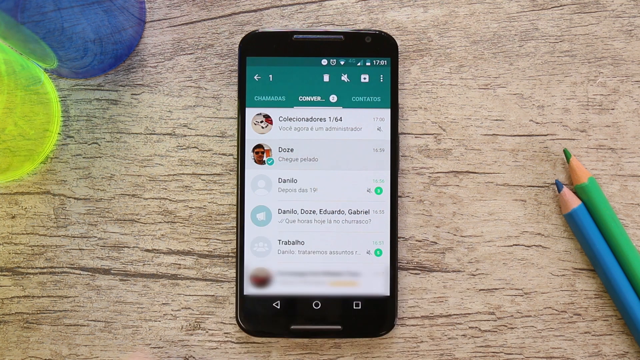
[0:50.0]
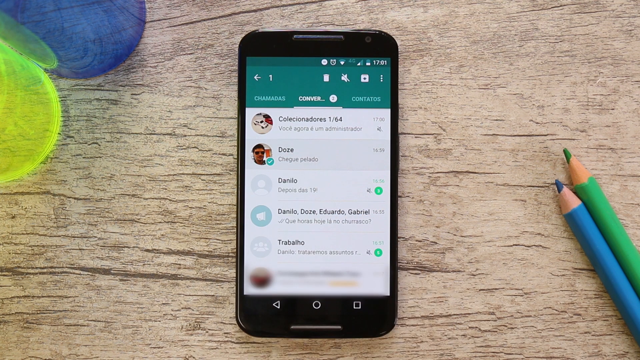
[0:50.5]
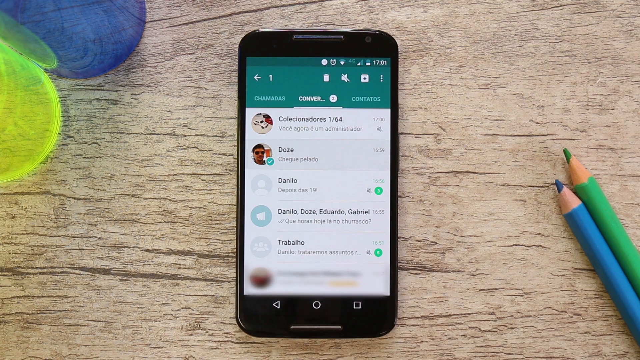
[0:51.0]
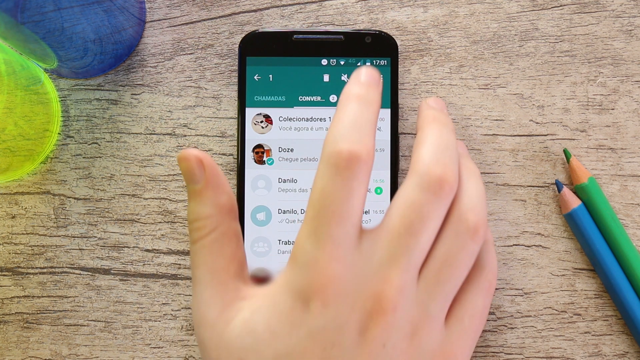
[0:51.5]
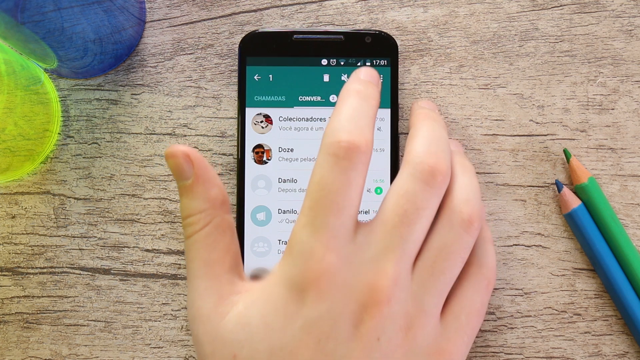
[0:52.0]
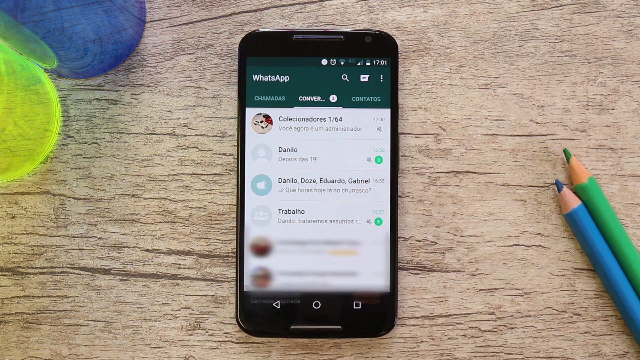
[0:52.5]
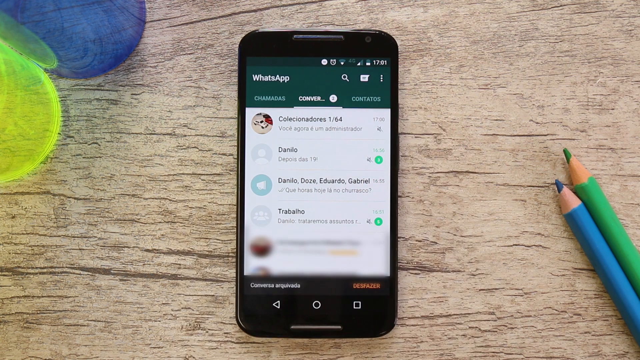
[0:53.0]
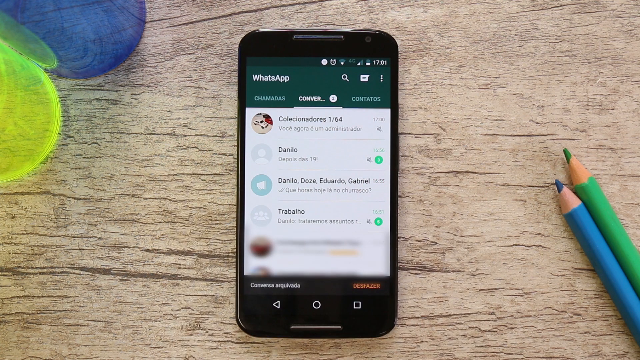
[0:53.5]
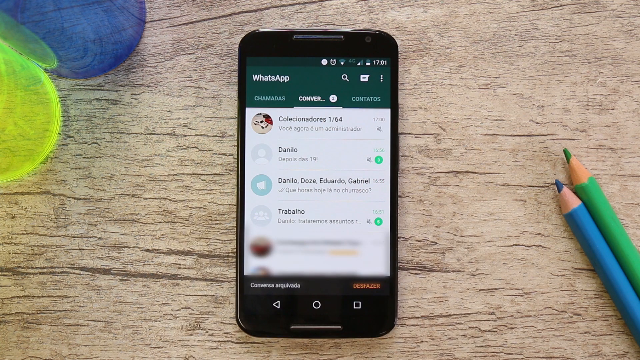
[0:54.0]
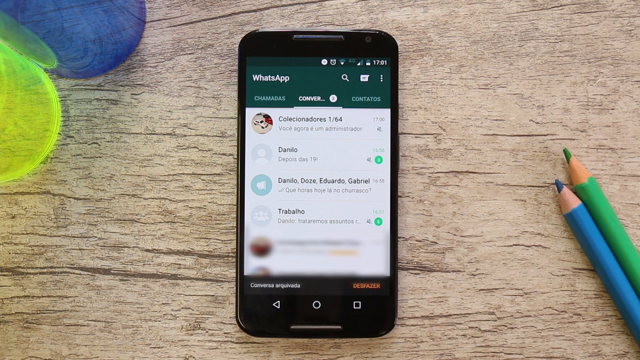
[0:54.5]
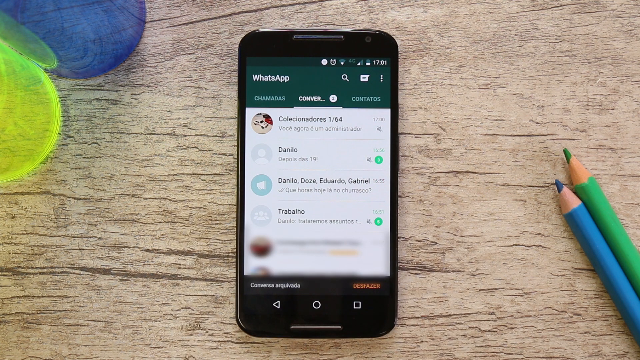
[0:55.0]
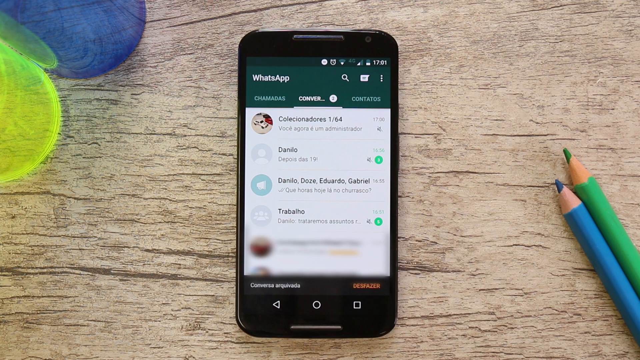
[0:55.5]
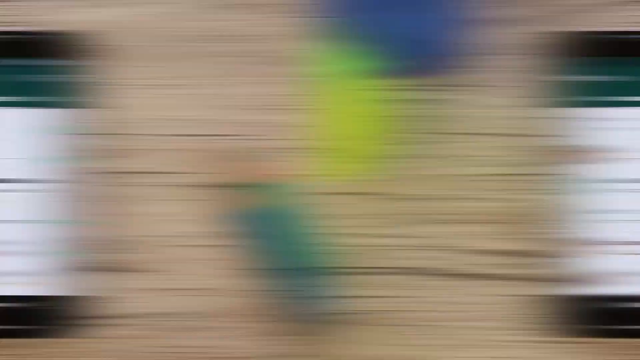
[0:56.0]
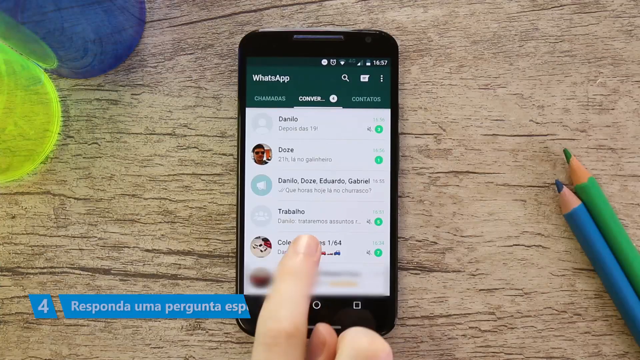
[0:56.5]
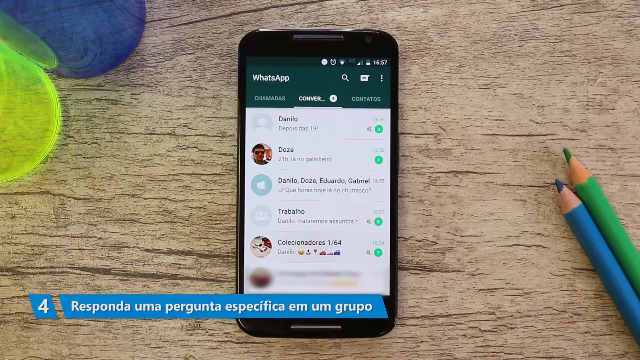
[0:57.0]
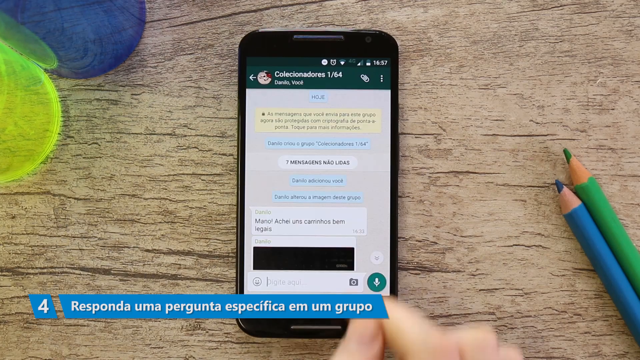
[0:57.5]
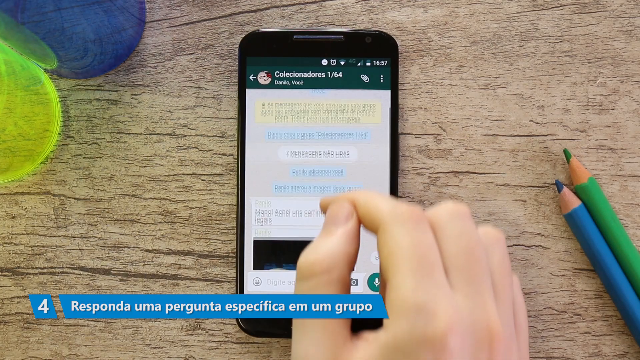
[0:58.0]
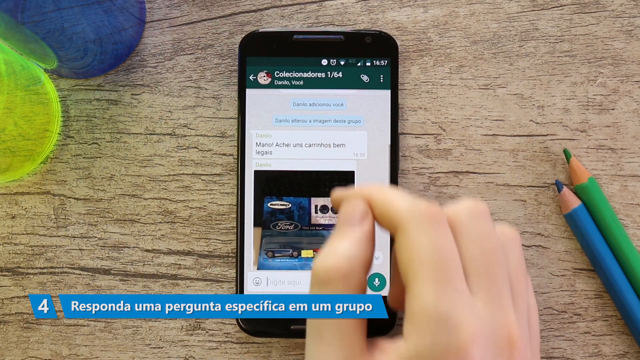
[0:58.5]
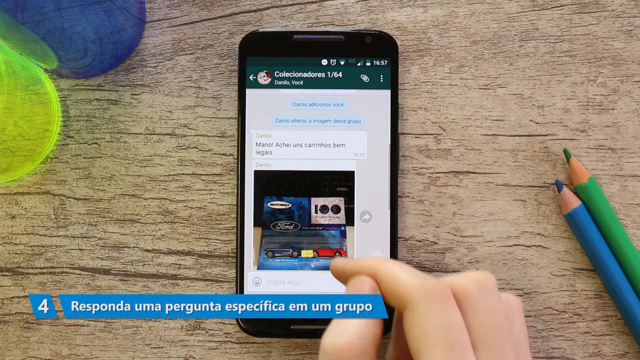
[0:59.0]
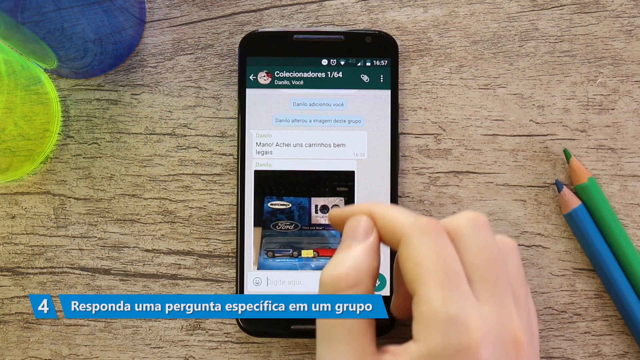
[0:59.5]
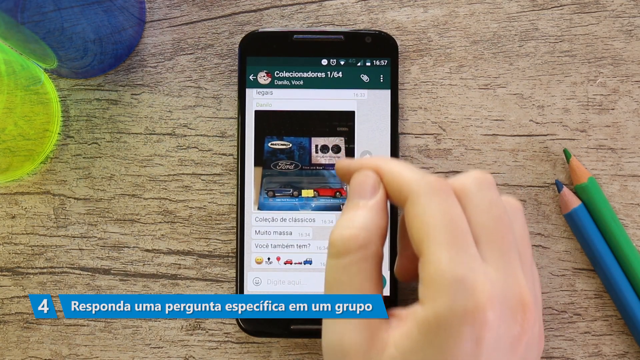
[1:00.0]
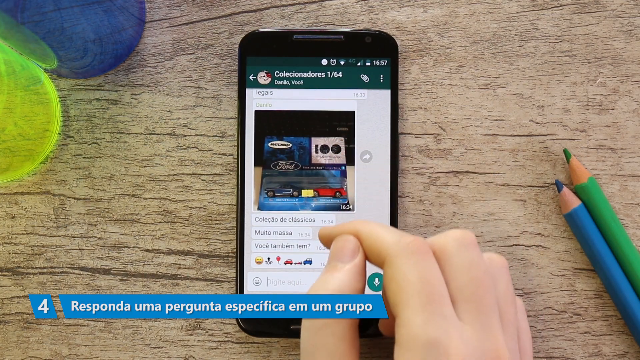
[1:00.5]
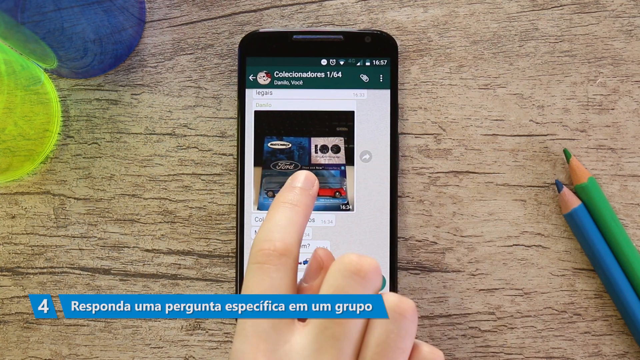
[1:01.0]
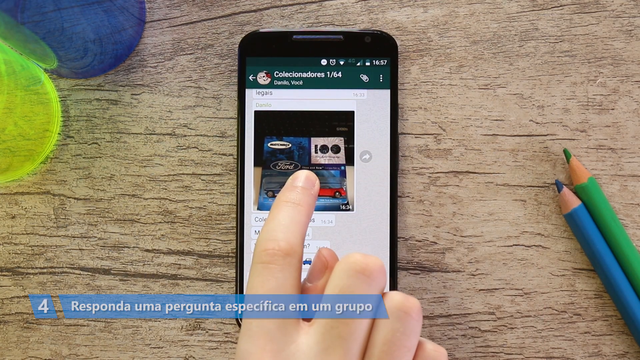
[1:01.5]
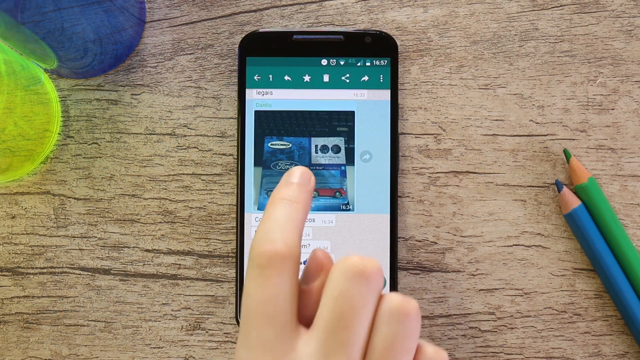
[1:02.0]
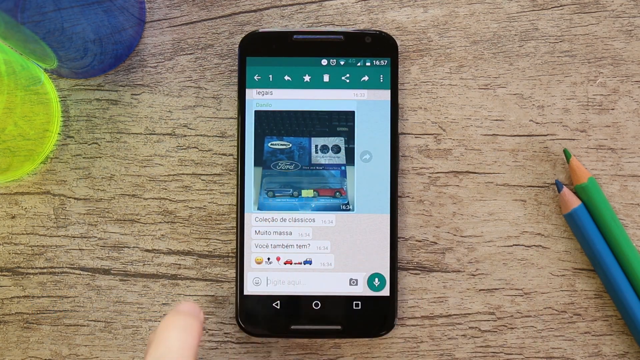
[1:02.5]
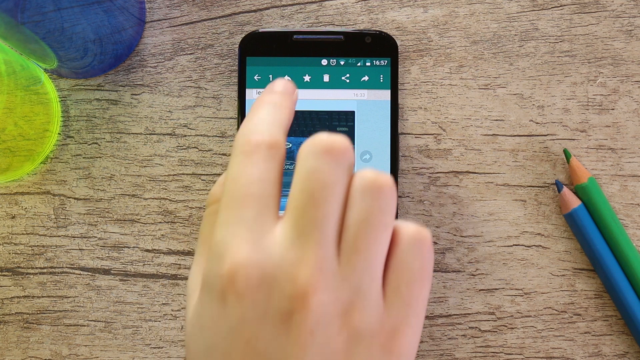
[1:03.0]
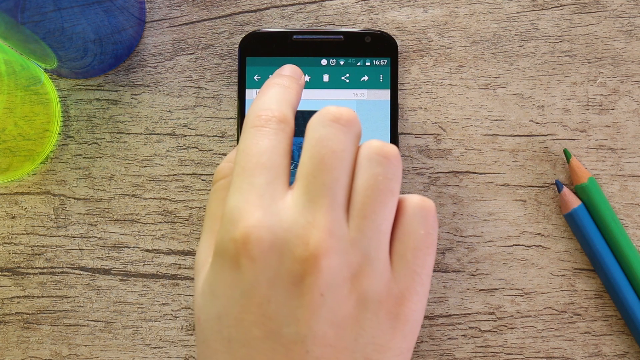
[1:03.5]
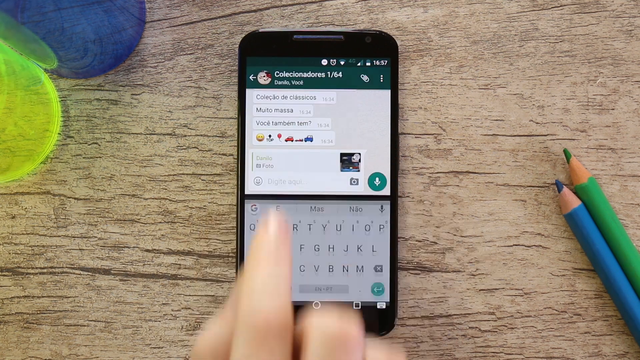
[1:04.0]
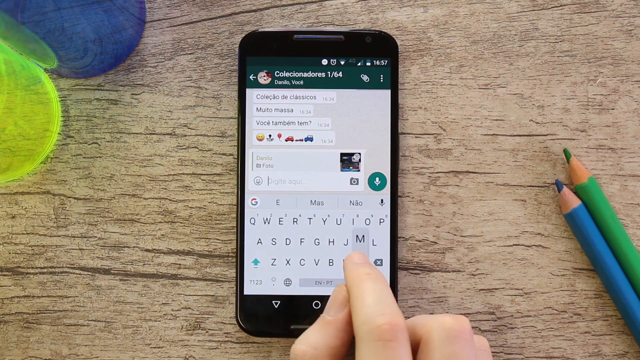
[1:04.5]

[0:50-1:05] In the app, the person taps an icon next to the magnifying glass, then taps on what looks like a conversation with someone. There is a photo of Ford cars, like matchbox cars, and the person appears to be sending a message with these toy cars in the conversation, apparently typing some text about the cars. The person then taps an unidentified icon in the top left of the app. The number four is written at the bottom with the text "responda a una pregunta especifica en un grupo".